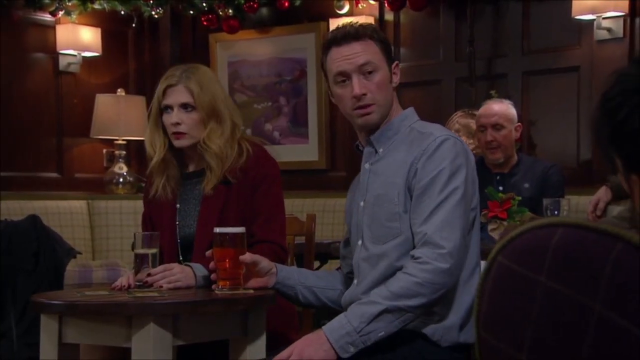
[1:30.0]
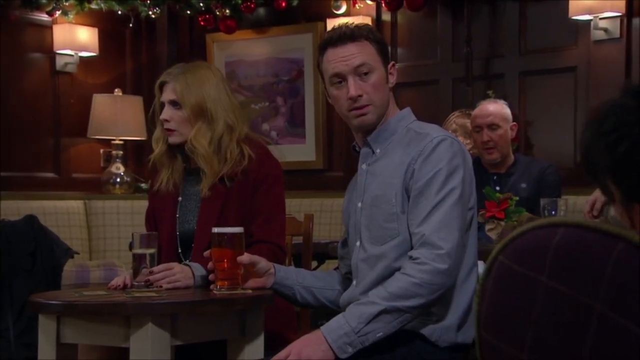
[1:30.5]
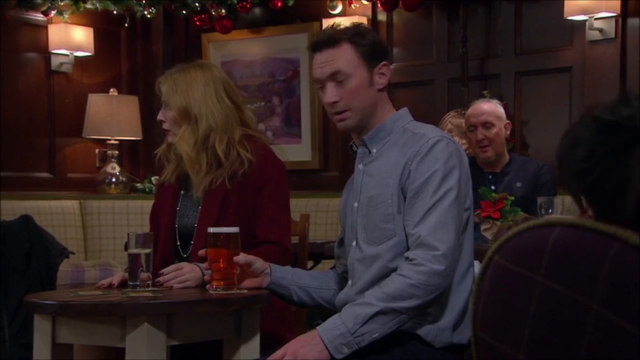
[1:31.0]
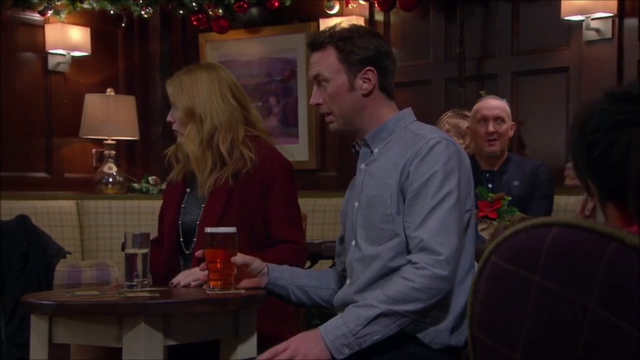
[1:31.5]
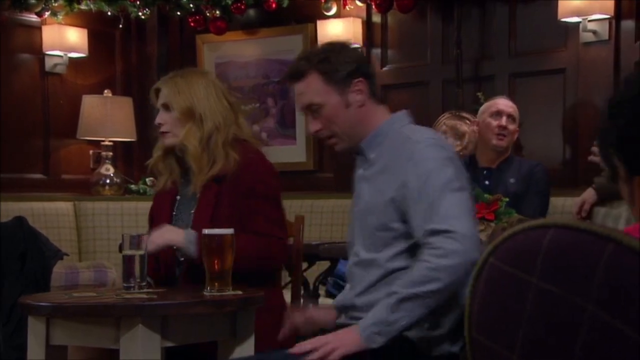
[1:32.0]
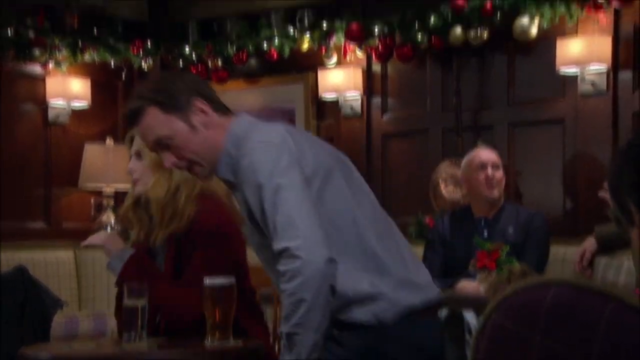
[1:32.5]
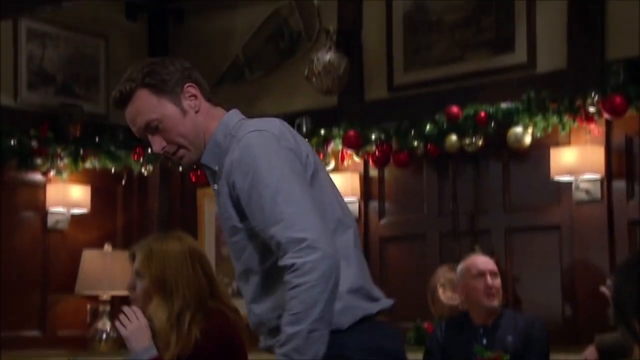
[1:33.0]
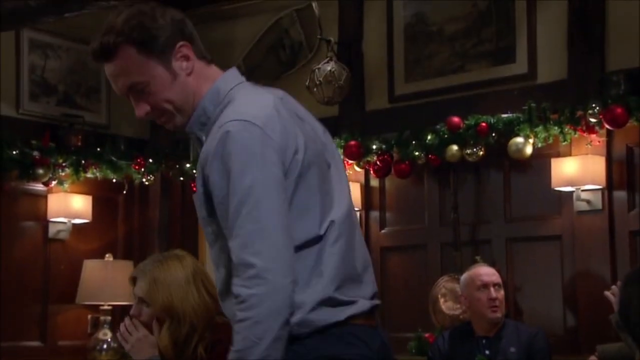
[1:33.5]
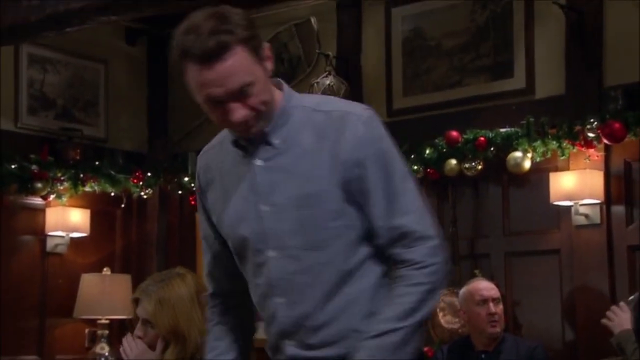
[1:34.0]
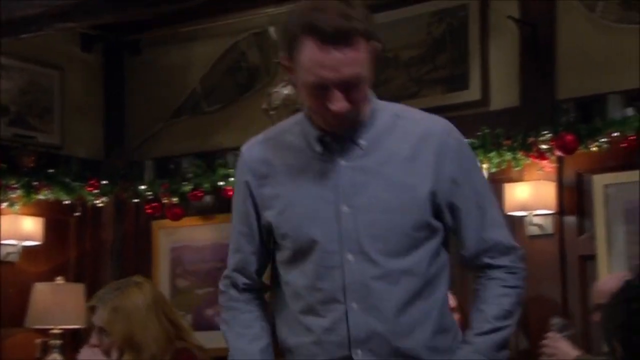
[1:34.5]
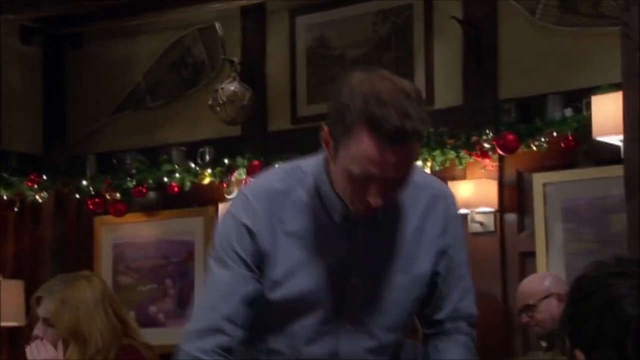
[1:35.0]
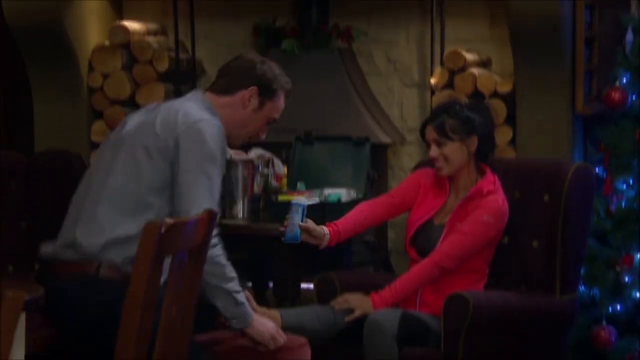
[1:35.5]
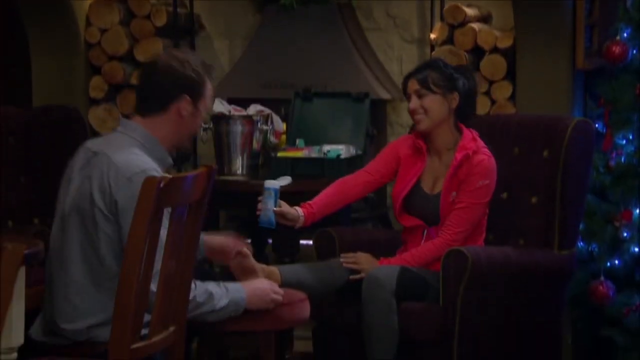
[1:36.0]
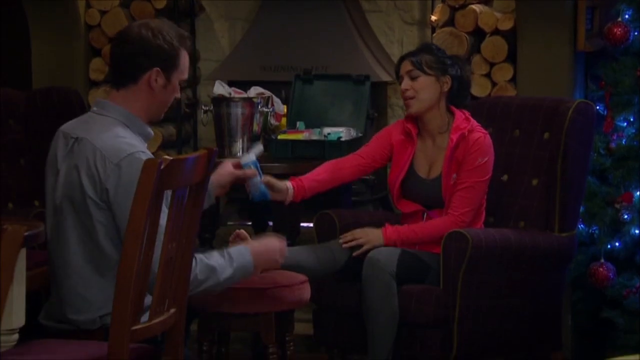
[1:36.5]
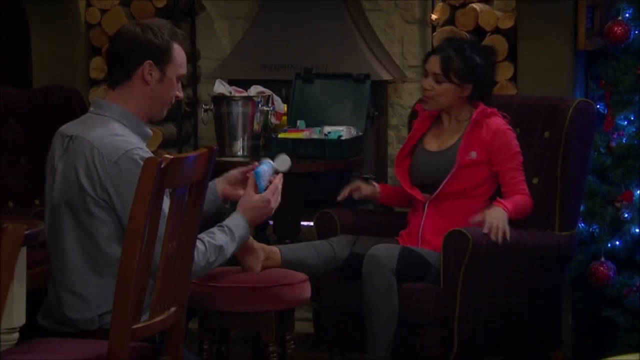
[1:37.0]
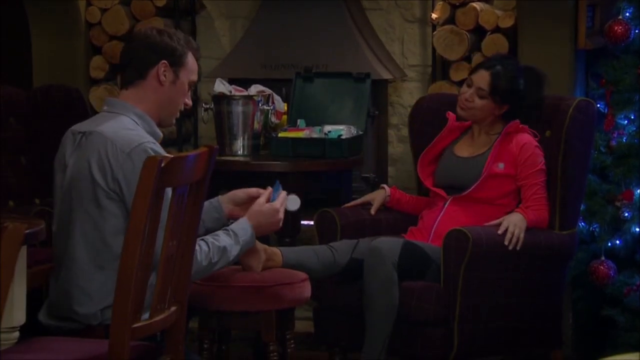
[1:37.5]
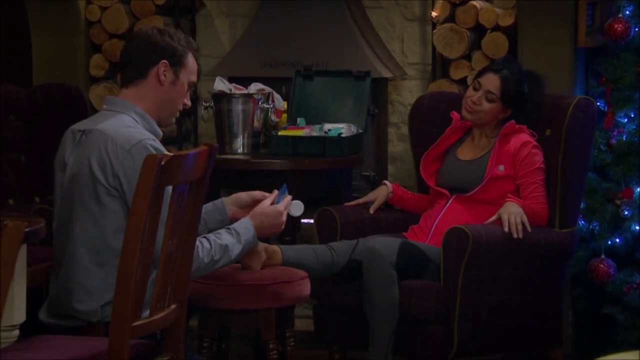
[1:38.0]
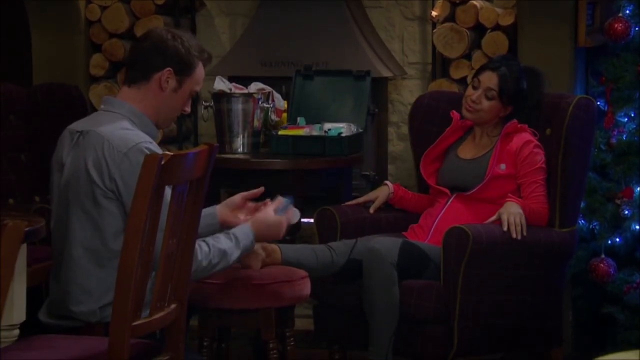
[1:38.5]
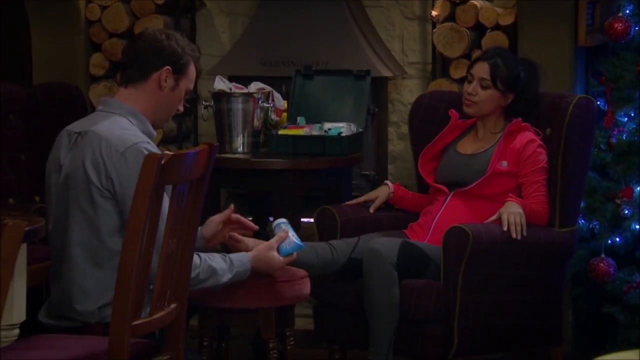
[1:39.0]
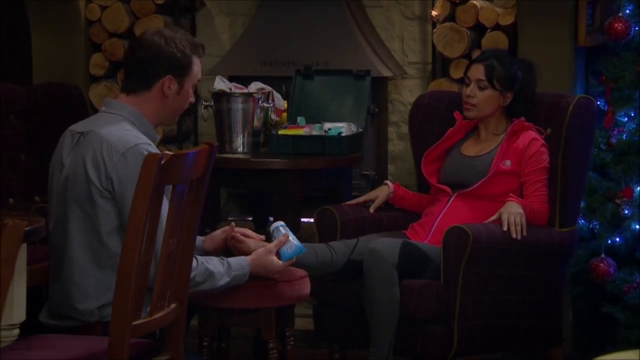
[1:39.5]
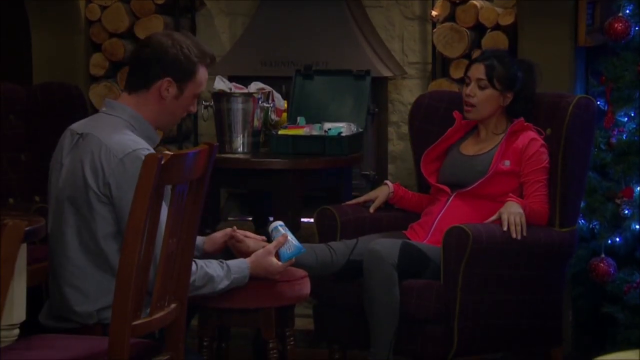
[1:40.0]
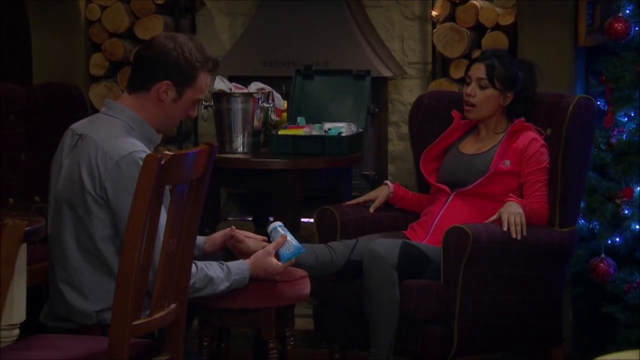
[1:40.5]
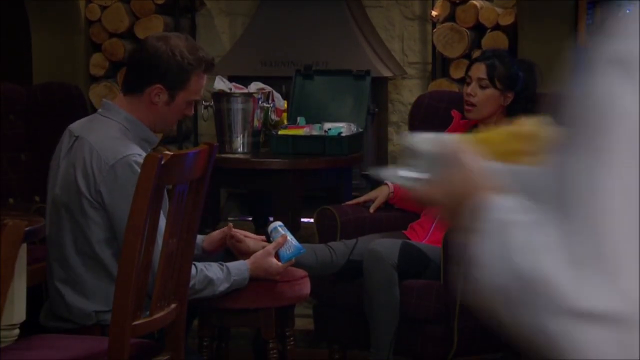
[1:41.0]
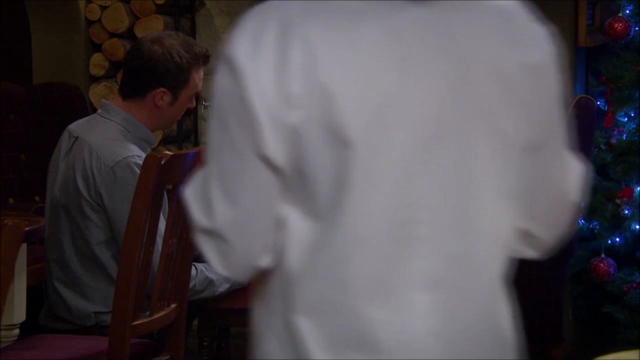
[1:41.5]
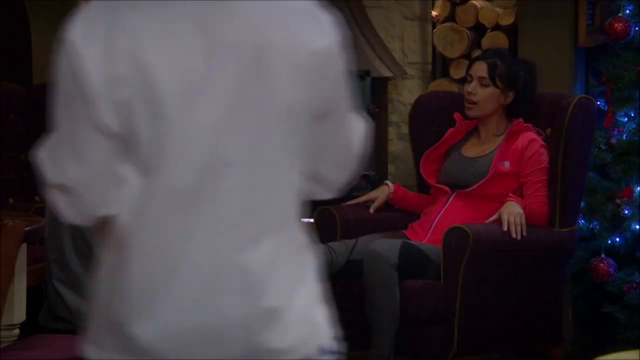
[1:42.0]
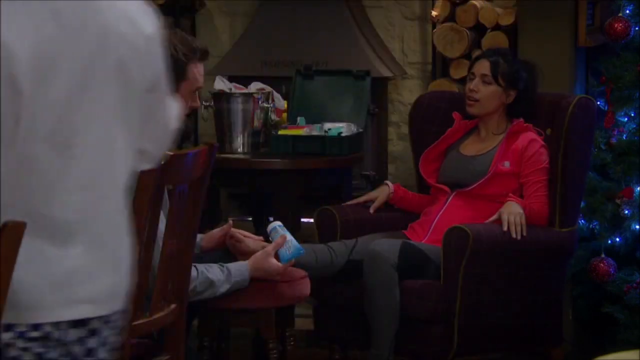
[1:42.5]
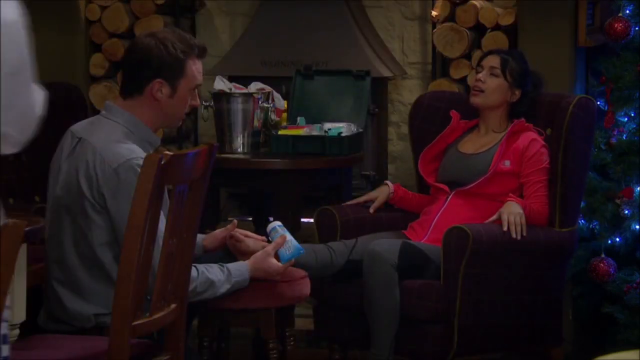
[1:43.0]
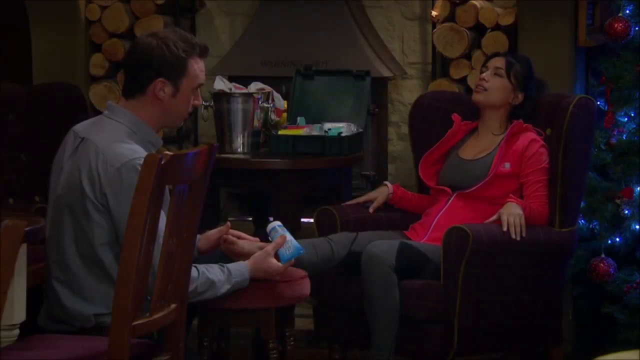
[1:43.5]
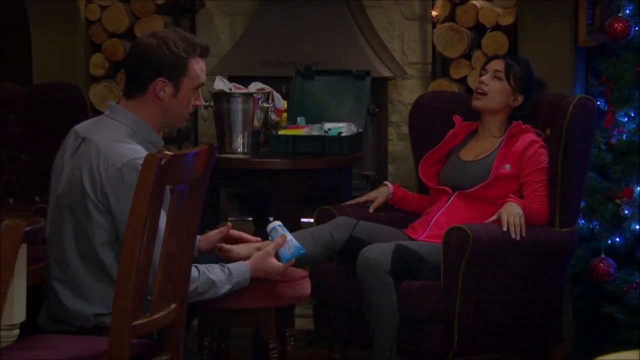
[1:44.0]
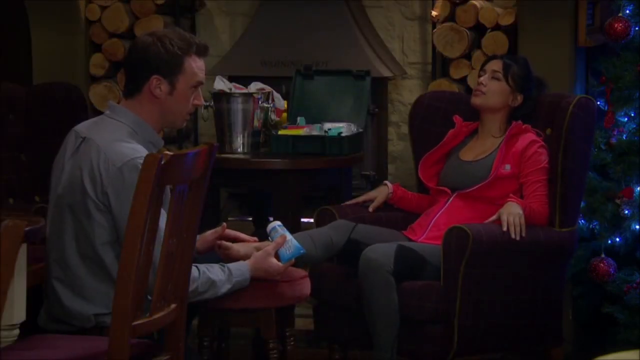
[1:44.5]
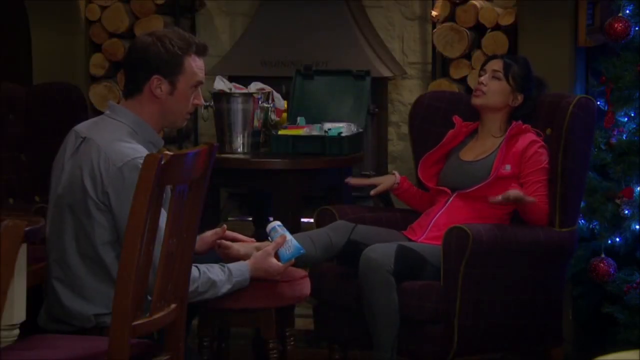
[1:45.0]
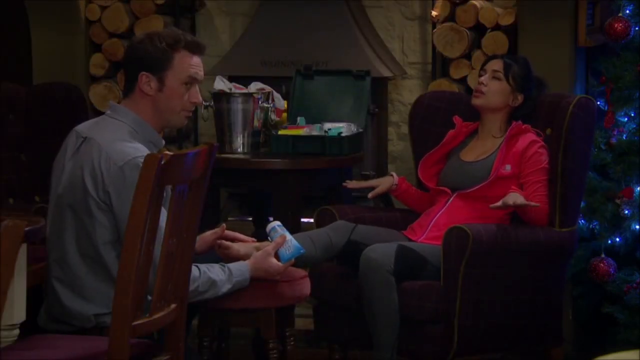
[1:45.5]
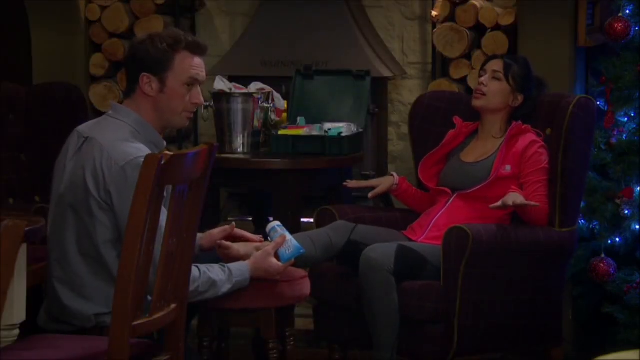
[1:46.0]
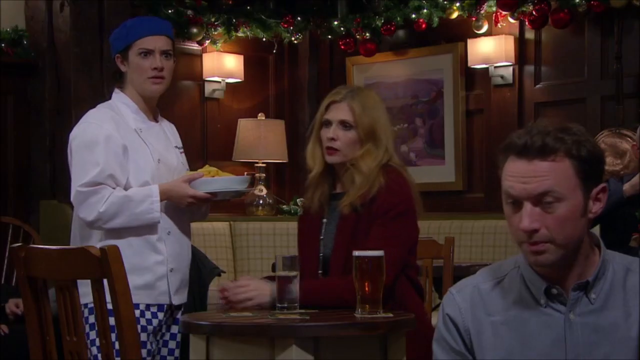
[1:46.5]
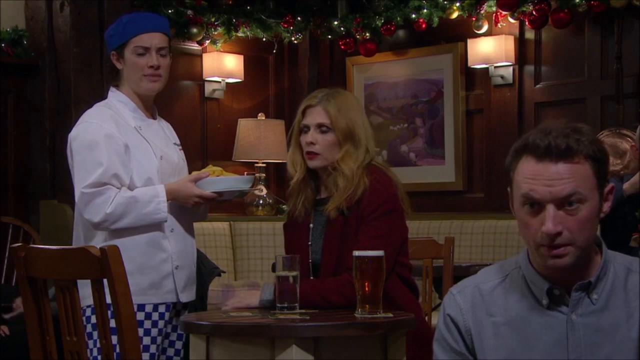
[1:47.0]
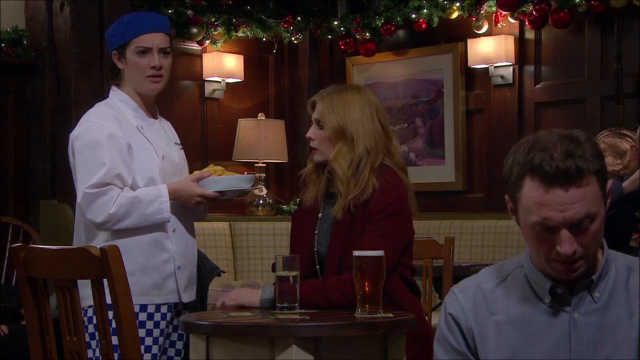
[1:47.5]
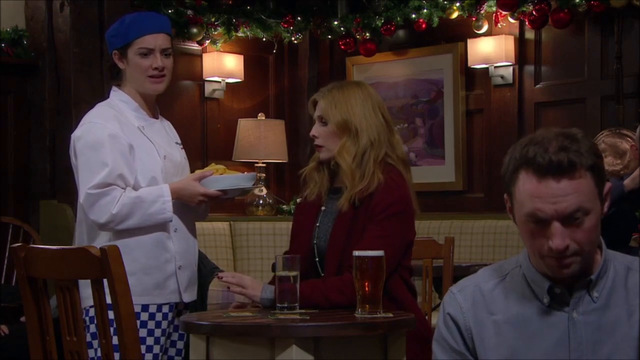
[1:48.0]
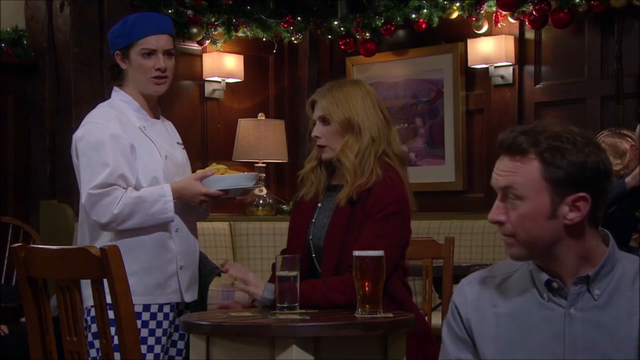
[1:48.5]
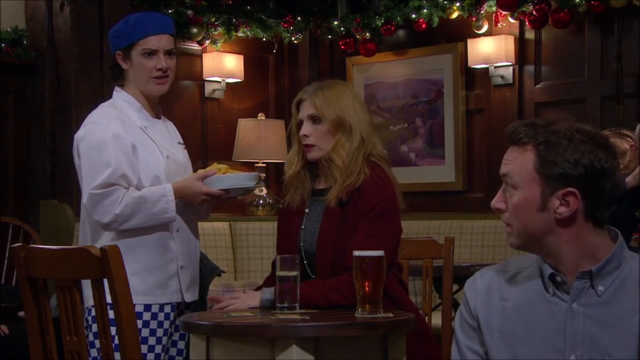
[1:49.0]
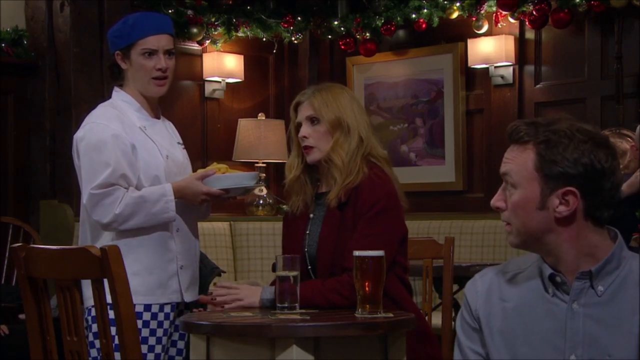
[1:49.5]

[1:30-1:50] The man puts the beer down, stands up, walks over to the injured woman, and kneels down; her ankle is on a footstool. She hands him the cream and seems happy about it. Her jacket is down, her chest is kind of exposed, and she kind of lies back as he puts the cream on her foot. It is still daytime, and there is stuff everywhere in the background. A female chef with a blue bandana, her hair put back, and a white coat comes walking by, carrying food out to the blonde lady in the red jacket and black top, and looks at what is happening. The man putting on the cream looks back, seeming awkward and uncomfortable. The blonde lady does not look happy and seems ready to start a fight.